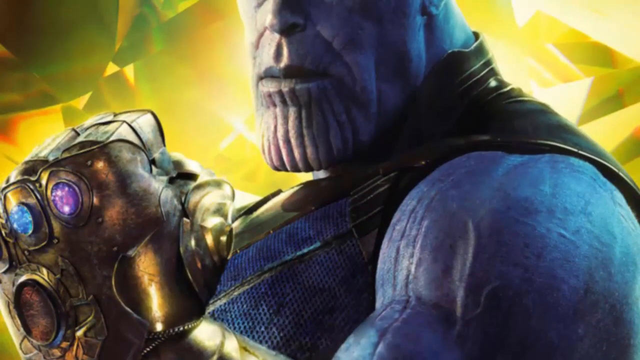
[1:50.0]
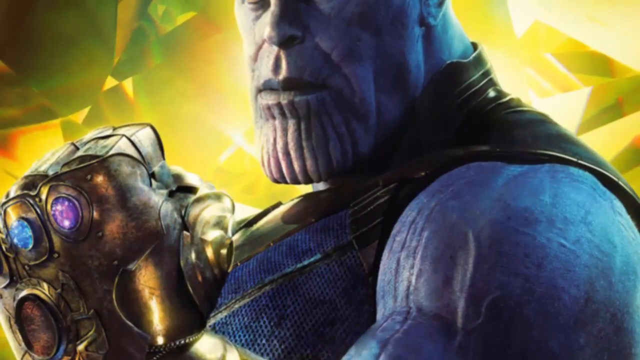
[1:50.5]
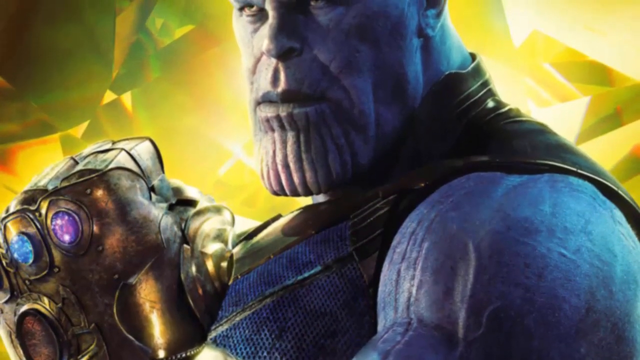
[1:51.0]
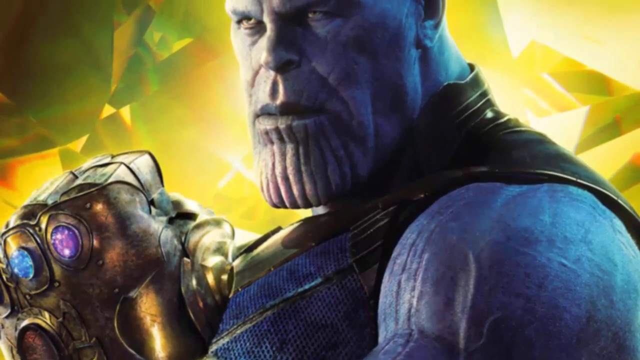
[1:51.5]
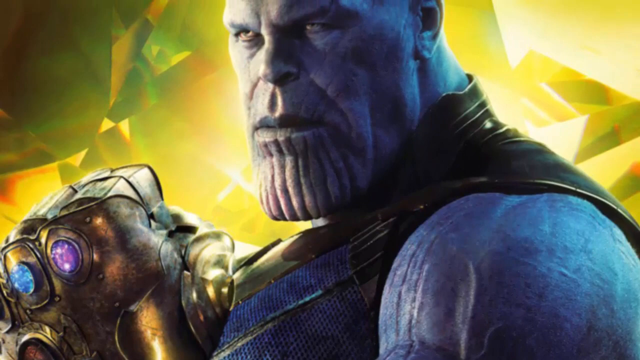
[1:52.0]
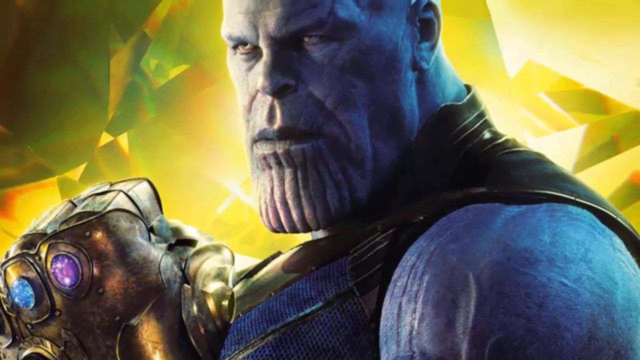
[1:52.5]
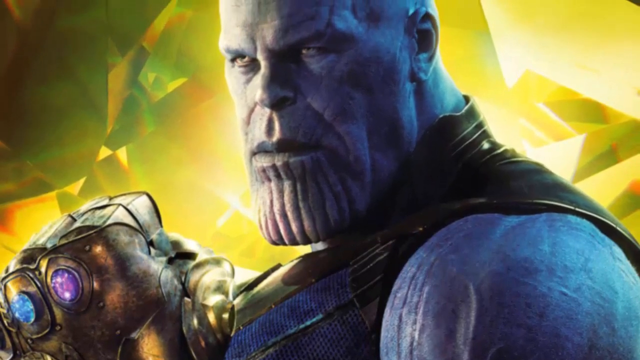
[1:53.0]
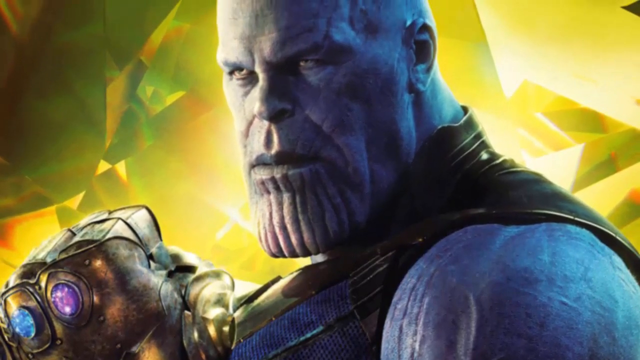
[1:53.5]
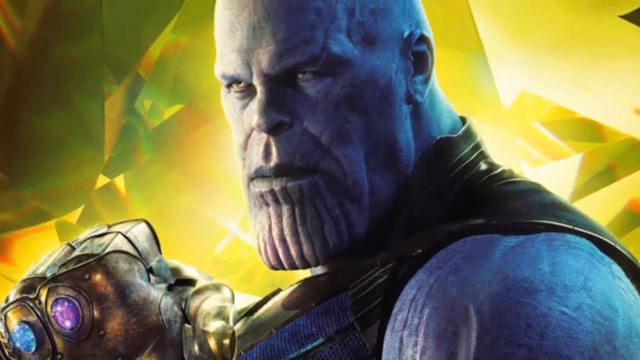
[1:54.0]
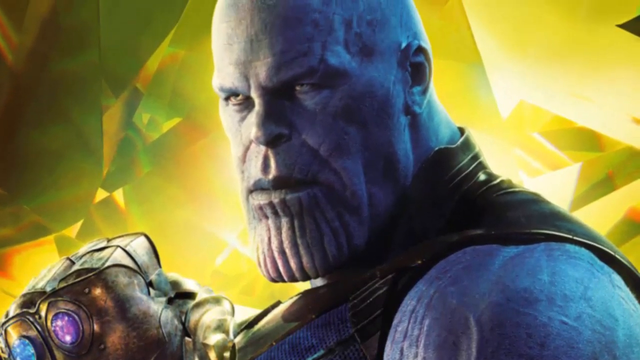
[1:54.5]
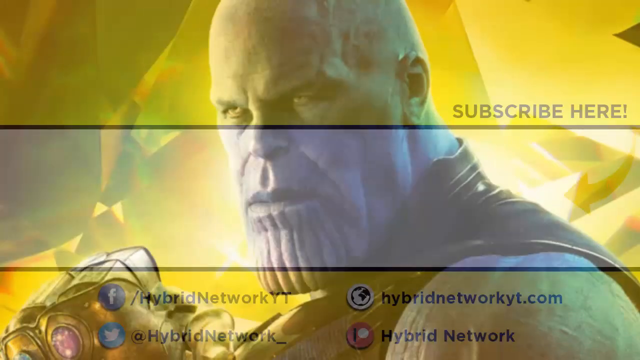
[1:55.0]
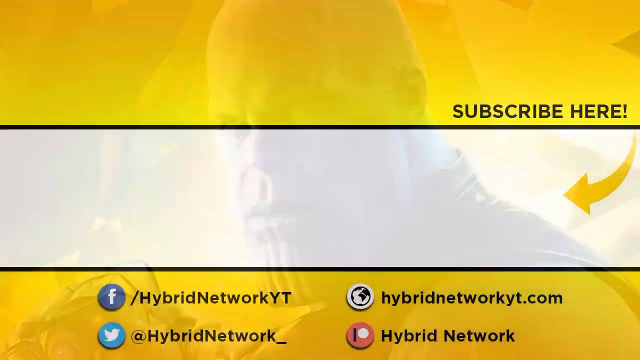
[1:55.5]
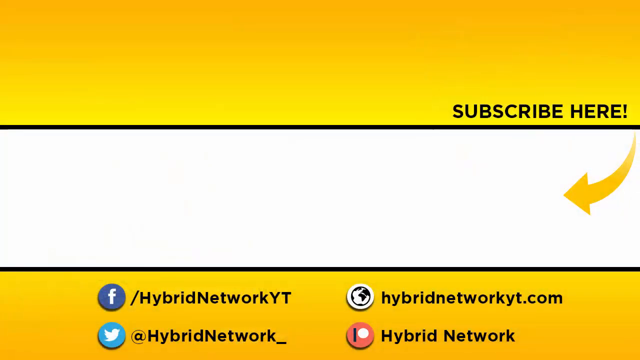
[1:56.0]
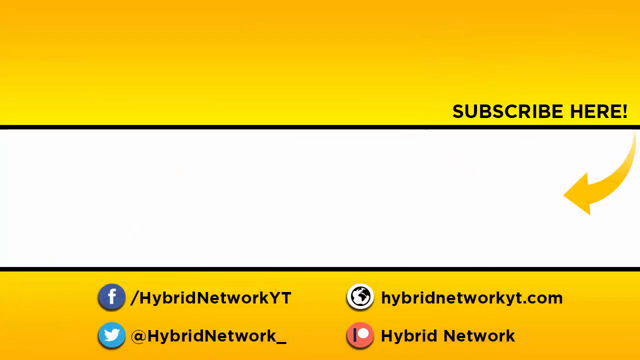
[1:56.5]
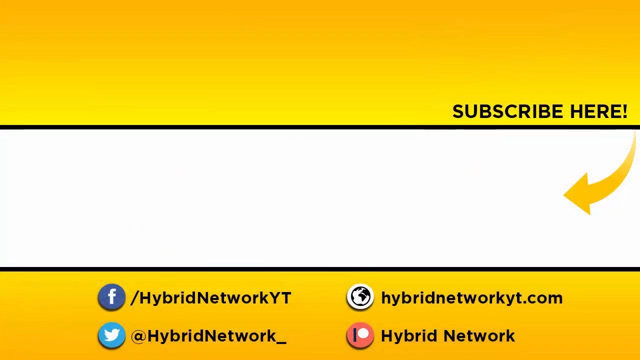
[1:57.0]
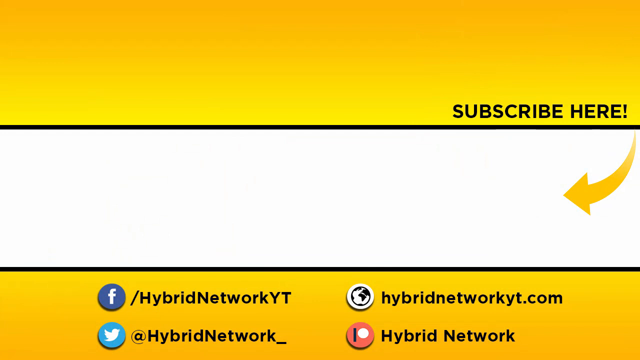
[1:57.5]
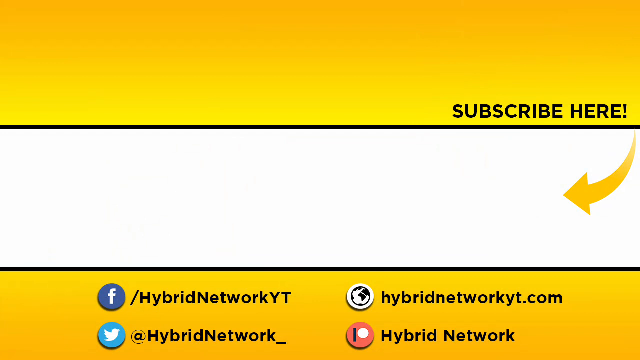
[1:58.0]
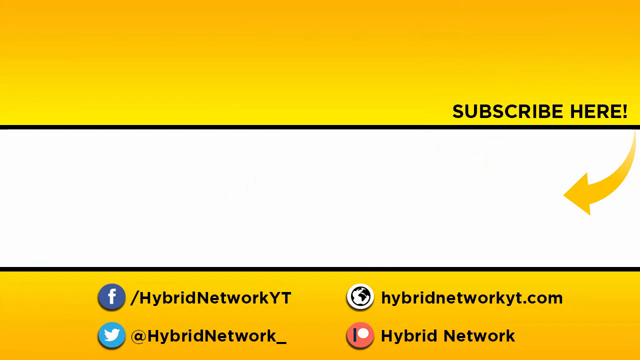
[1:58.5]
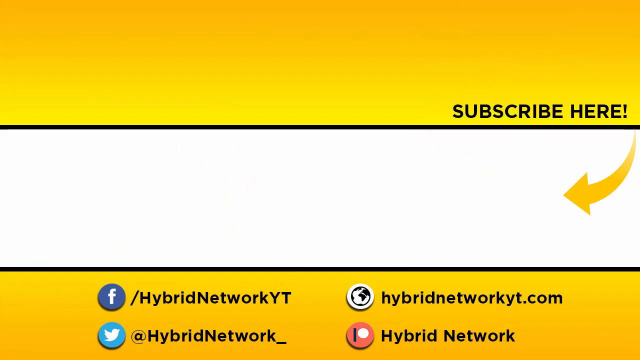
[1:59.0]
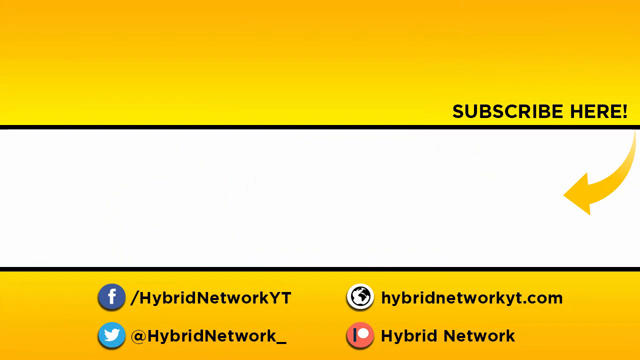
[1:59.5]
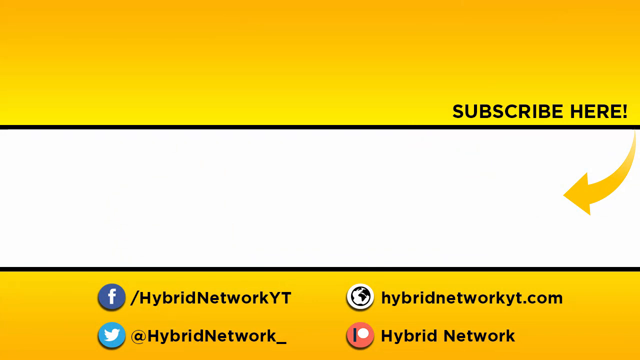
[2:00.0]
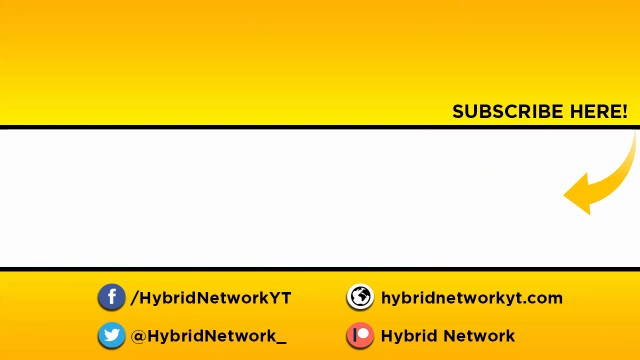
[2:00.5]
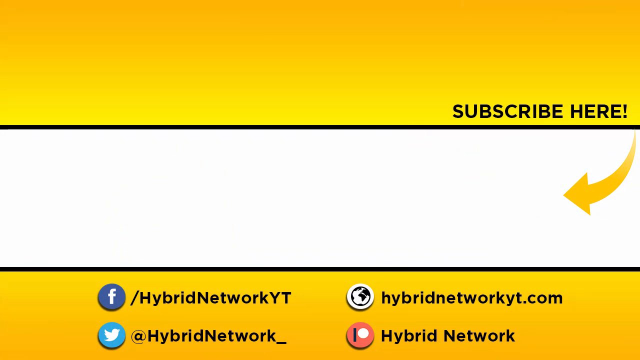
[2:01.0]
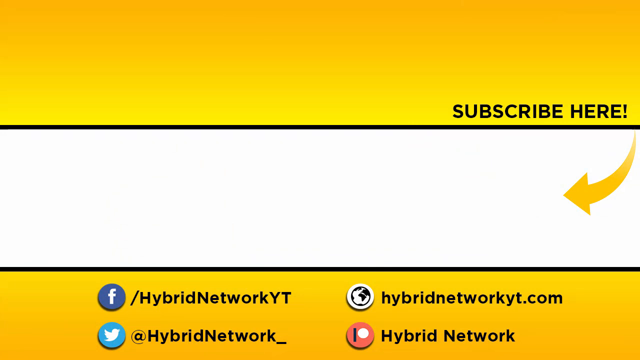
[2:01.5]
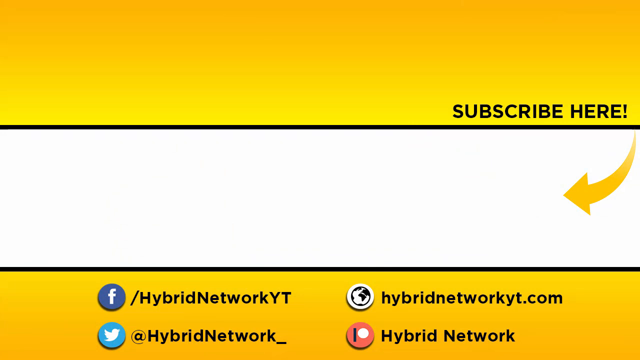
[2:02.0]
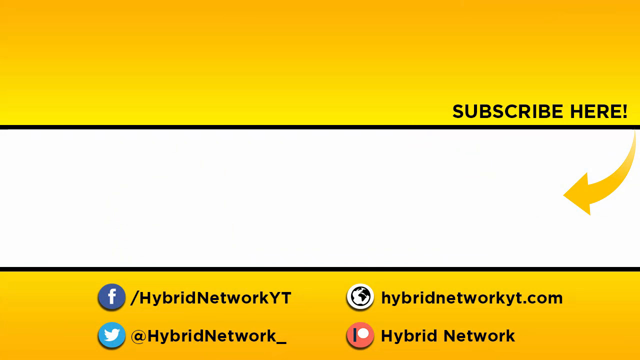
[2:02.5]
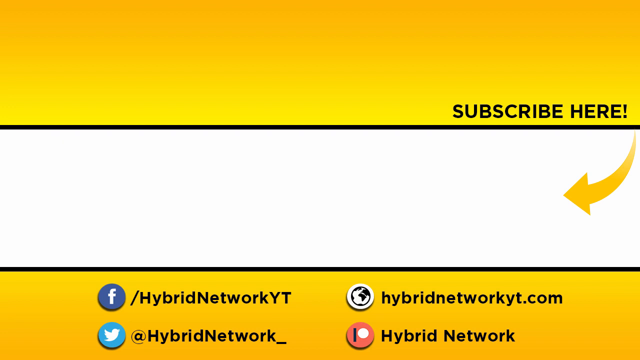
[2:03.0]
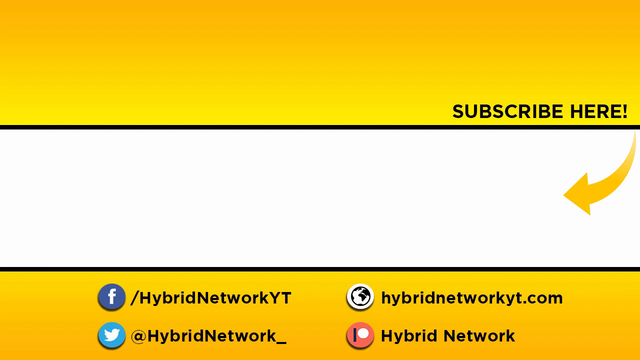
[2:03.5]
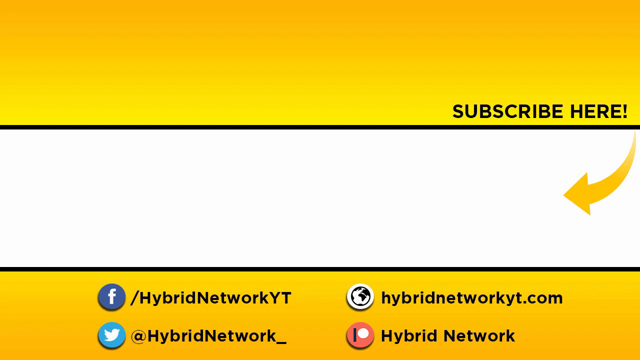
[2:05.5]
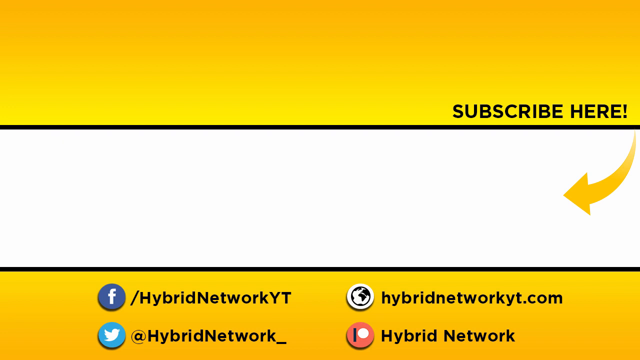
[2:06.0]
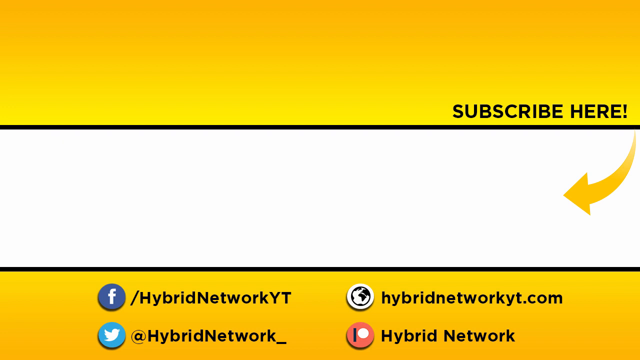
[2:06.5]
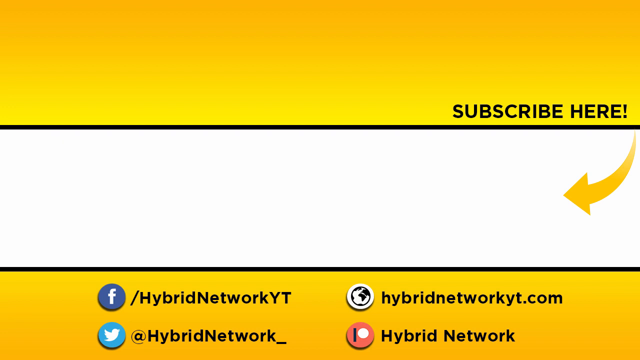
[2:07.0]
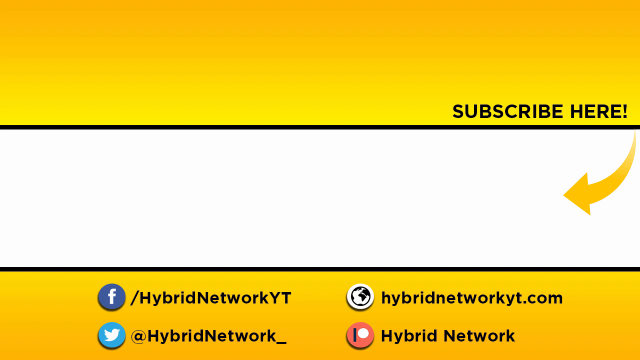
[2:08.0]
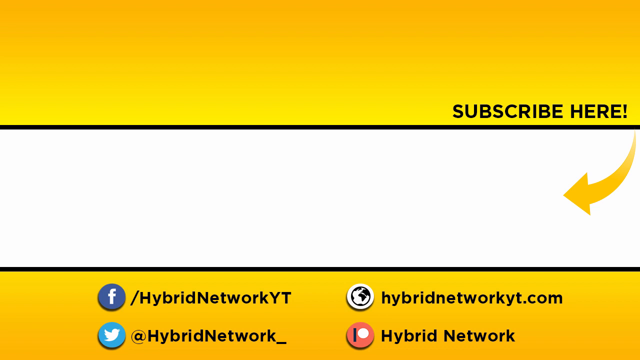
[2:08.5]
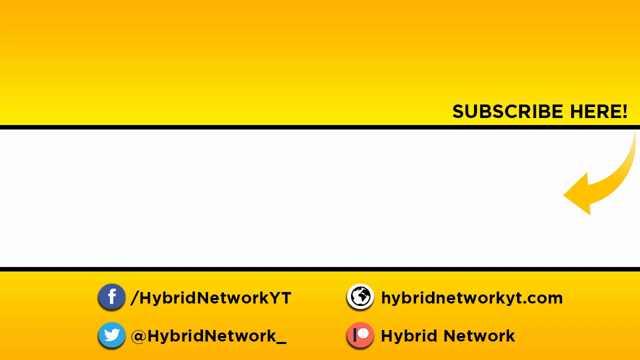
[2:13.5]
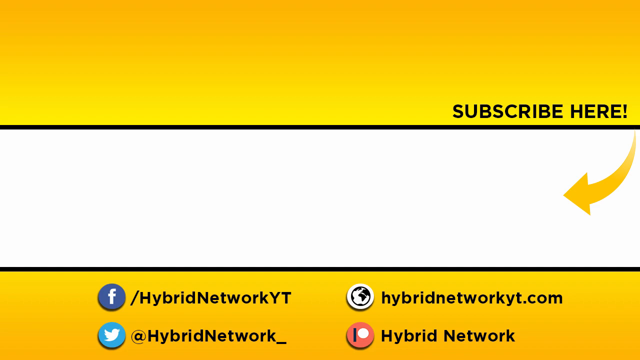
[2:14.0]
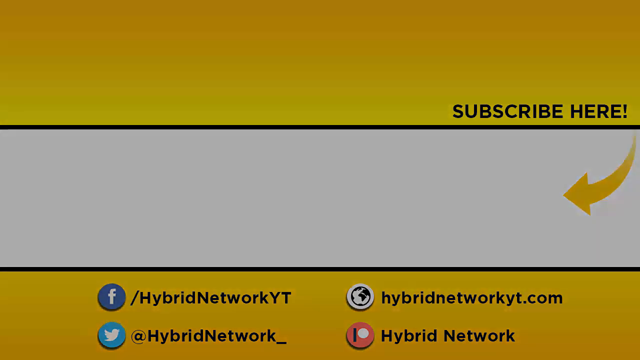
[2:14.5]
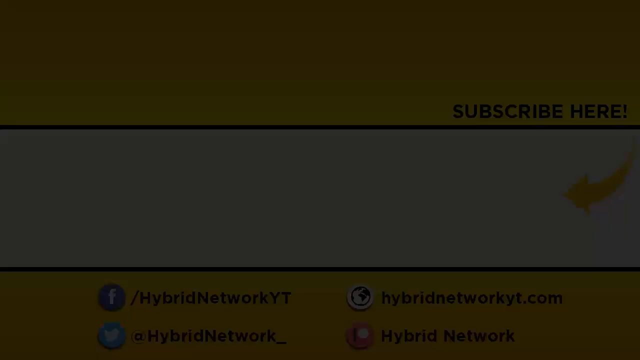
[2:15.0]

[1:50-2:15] A blue superhero wears a leather vest. He is very muscly, with some striations and some scars on his face. He stands behind a bright yellow, industrial-looking area. To his left is something made of metal with blue and purple eyes. It is not moving, but the camera pans to show him completely. The video then pulls out to a screen that is yellow on top, then a thin black line, a white space, another thin black line, and another yellow space that fades into black. In the upper right corner it says "subscribe here". Below that, in the white, is an arrow pointing to the left, and below that a Facebook icon with "Hybrid Network YT". There is a logo and the text "Hybrid Network YT.com". Below that is a Twitter symbol with "Hybrid Network_", and another emblem that says "Hybrid Network". The screen stays for several seconds and then fades into black.